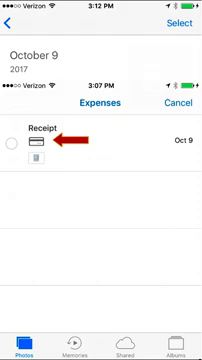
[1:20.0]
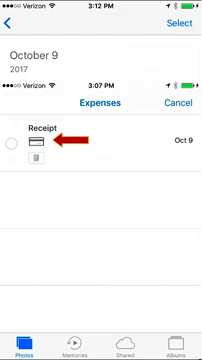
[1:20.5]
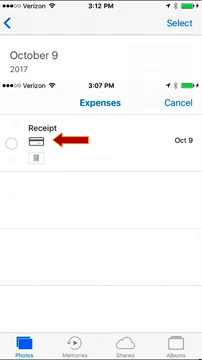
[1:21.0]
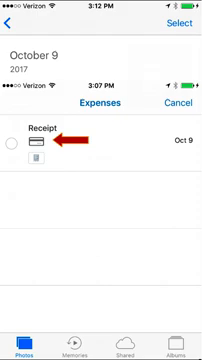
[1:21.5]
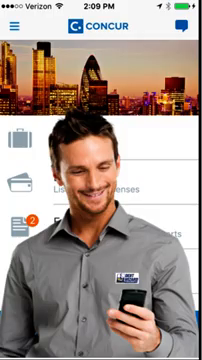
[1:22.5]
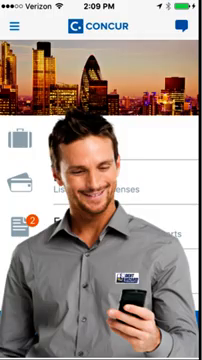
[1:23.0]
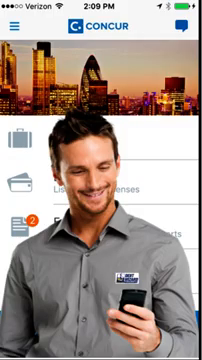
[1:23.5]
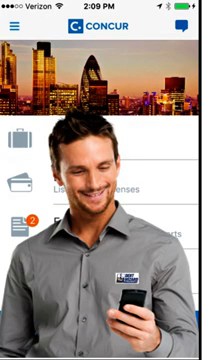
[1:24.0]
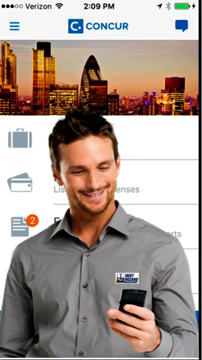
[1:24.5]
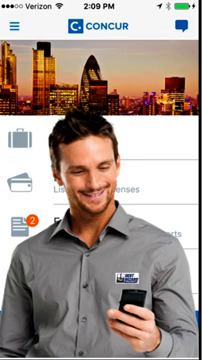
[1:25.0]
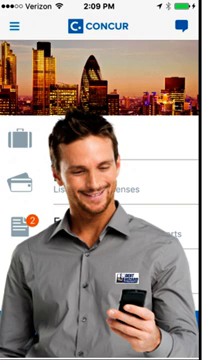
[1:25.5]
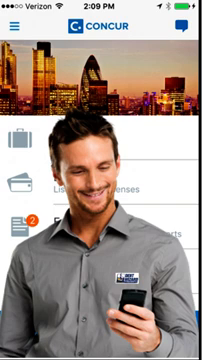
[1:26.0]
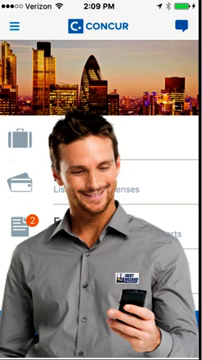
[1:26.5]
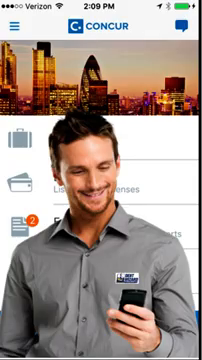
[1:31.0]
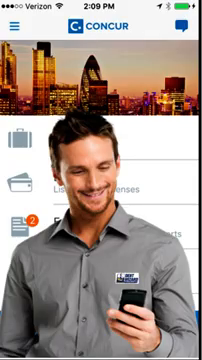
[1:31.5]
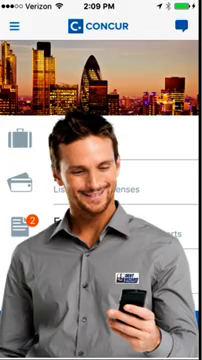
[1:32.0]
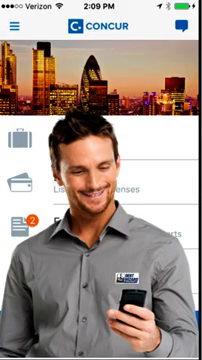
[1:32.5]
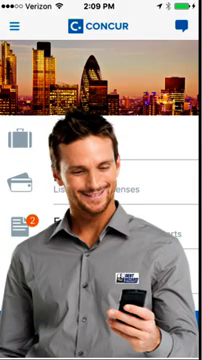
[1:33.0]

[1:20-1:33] A screen recording shows a user interacting with a mobile phone app through an emulator, using a standard computer cursor. On the screen is a list of expenses containing only one item, and an overlaying red arrow points toward an icon that looks like a credit card. The video then transitions to a different screen that appears to be a static image of the Concur application. In the background is a horizontal image of a cityscape at evening time. The rest of the app interface is obscured by a cutout image of a man holding a smartphone in his left hand and looking at it, though three icons are visible on the left side of the app screen. This is held on the screen for about five seconds.